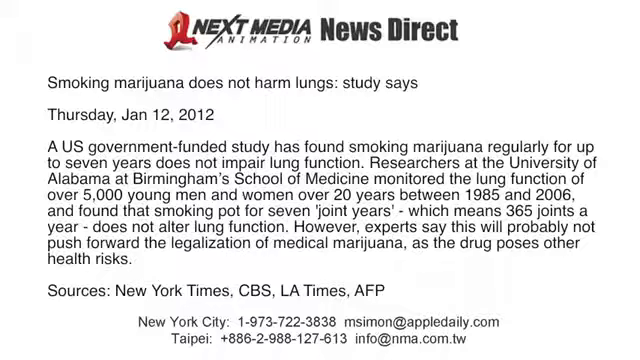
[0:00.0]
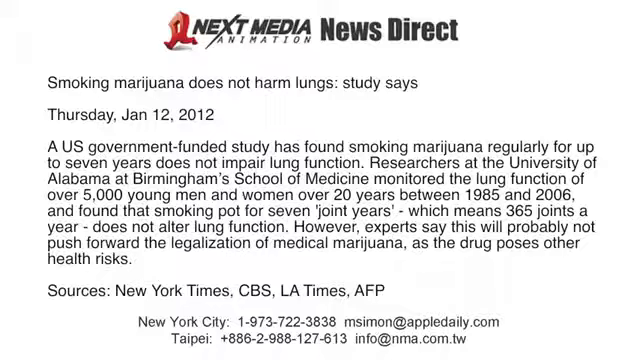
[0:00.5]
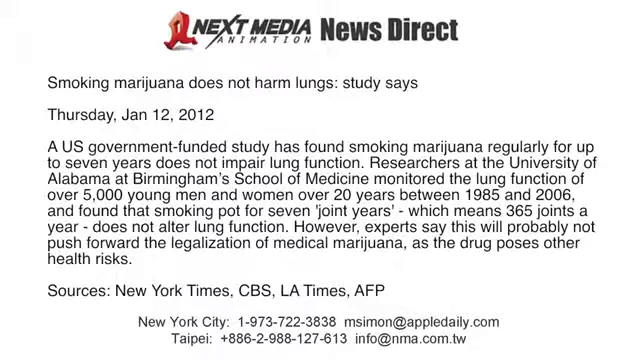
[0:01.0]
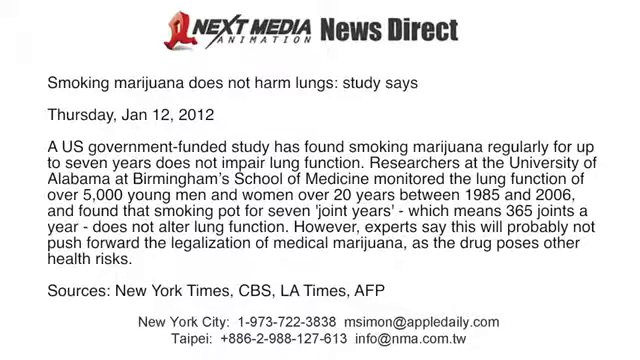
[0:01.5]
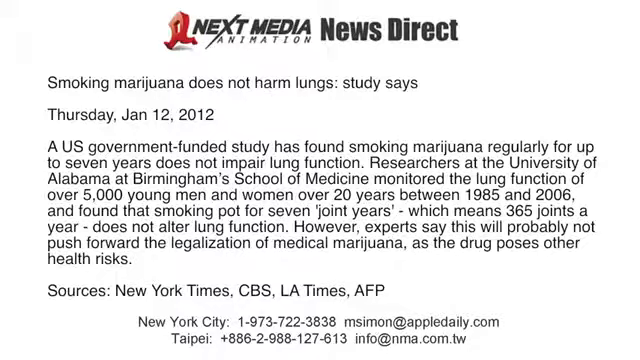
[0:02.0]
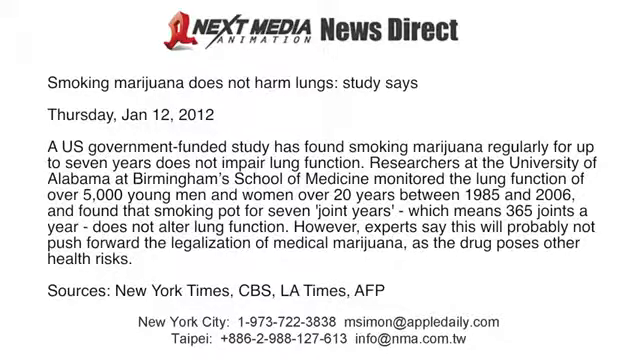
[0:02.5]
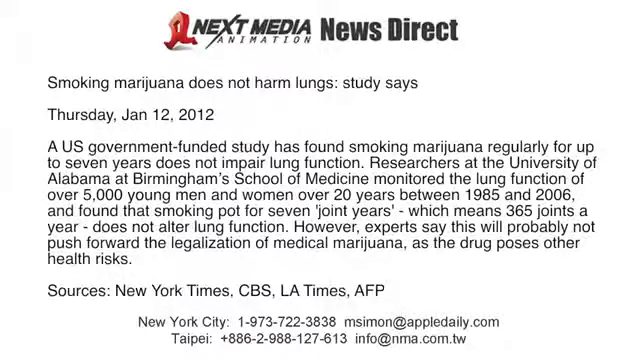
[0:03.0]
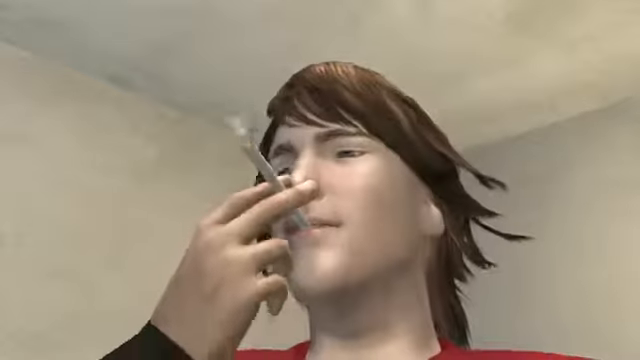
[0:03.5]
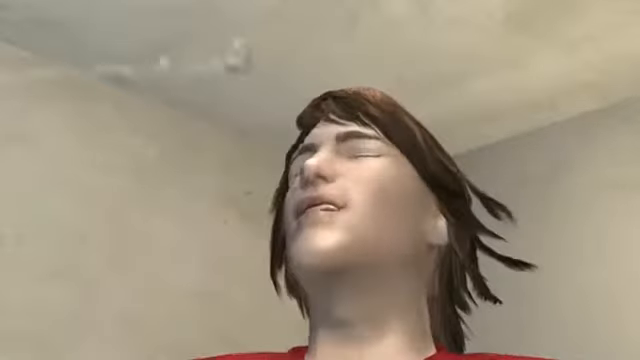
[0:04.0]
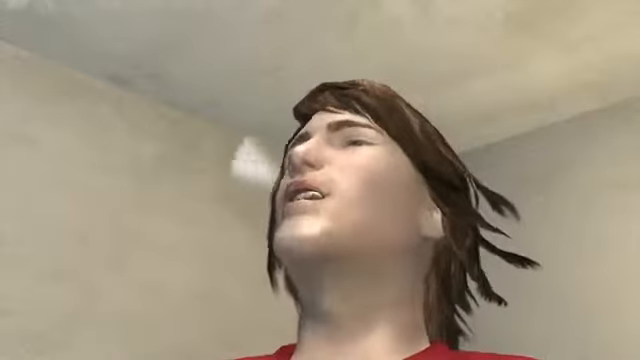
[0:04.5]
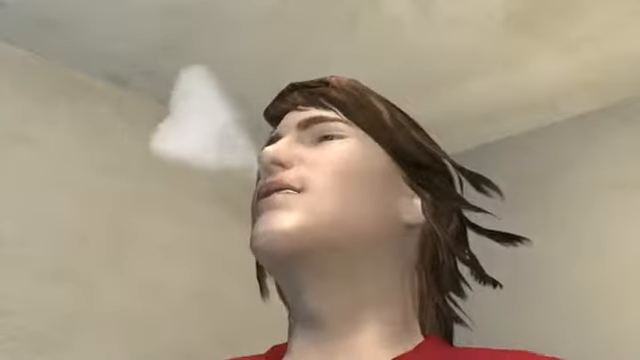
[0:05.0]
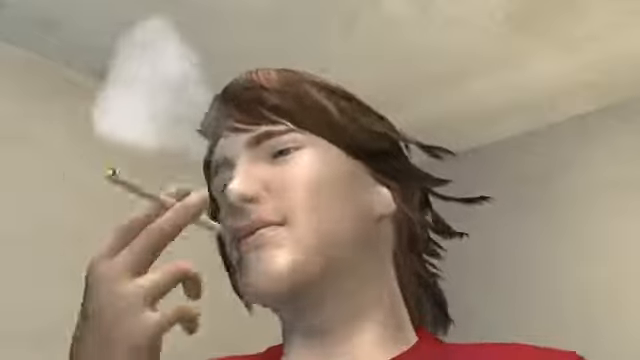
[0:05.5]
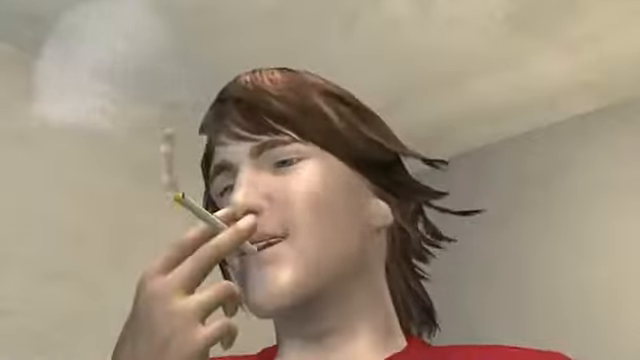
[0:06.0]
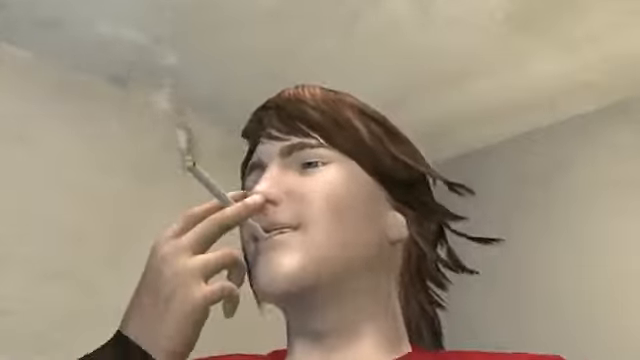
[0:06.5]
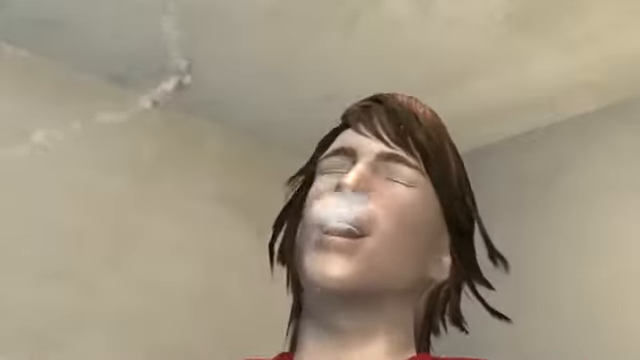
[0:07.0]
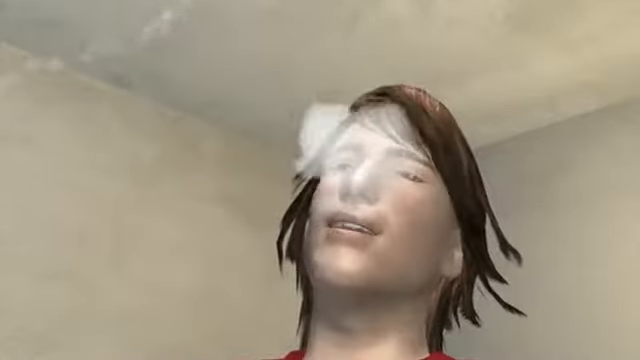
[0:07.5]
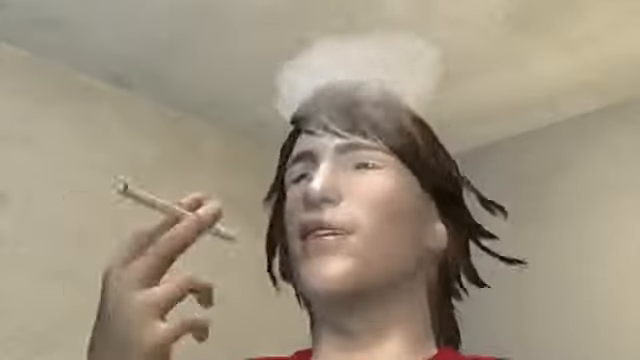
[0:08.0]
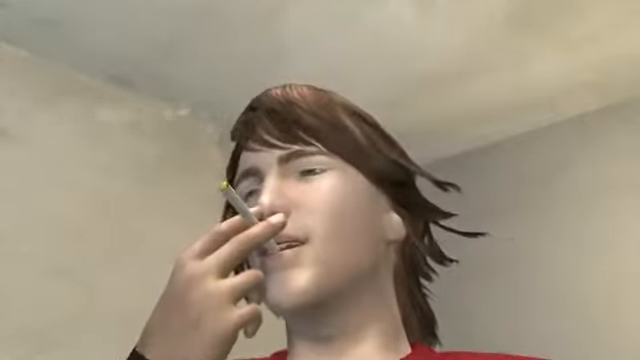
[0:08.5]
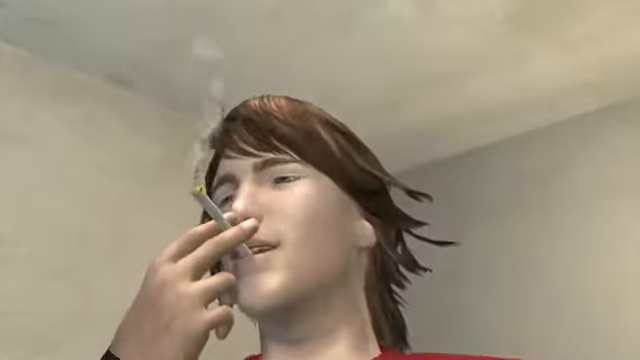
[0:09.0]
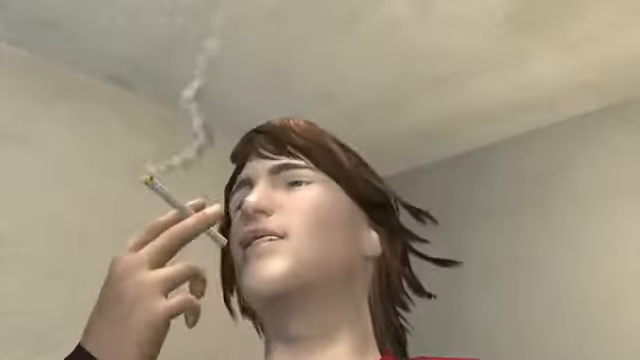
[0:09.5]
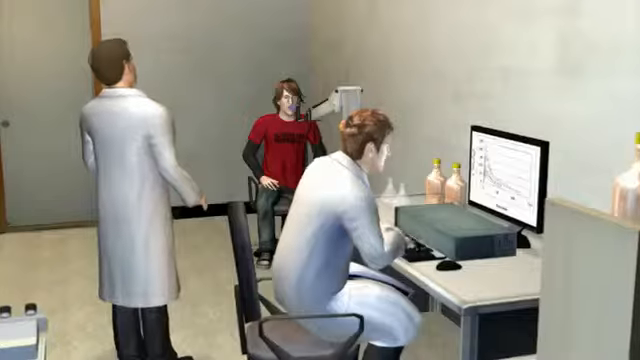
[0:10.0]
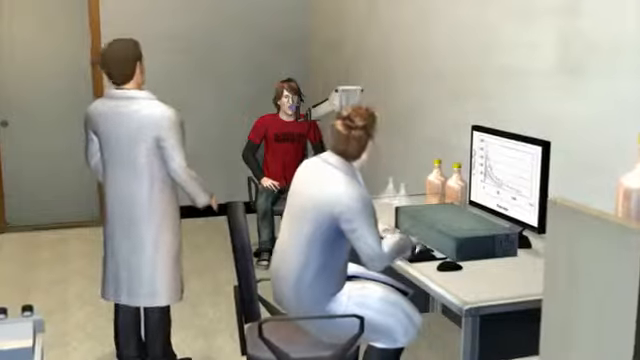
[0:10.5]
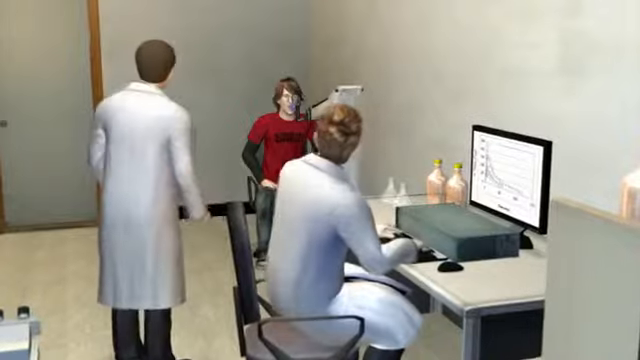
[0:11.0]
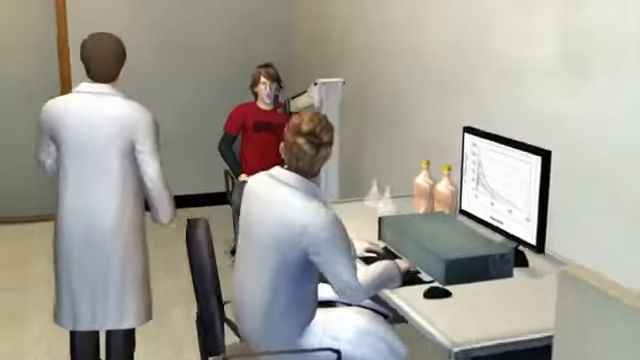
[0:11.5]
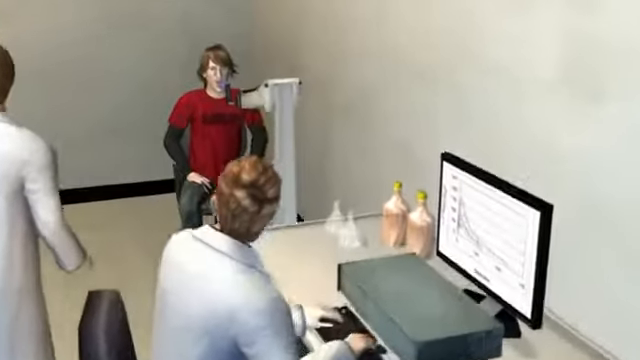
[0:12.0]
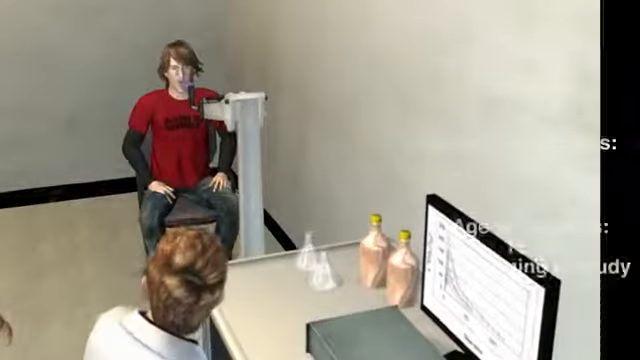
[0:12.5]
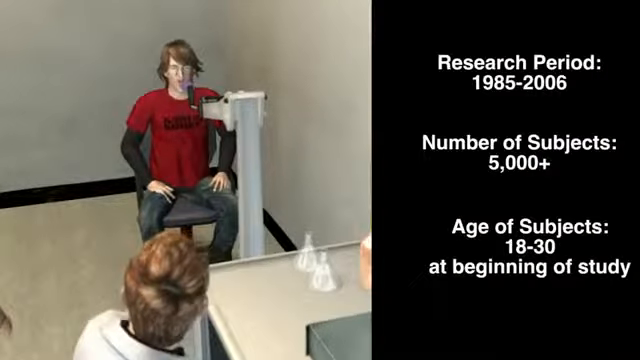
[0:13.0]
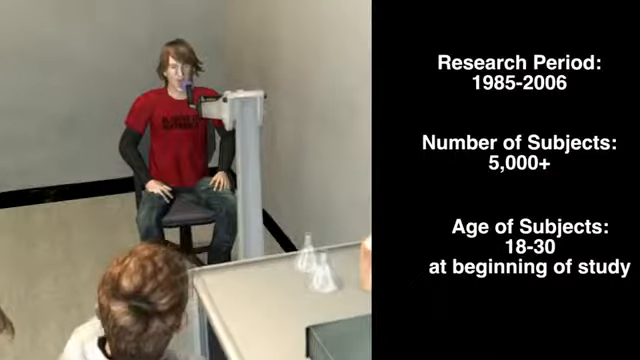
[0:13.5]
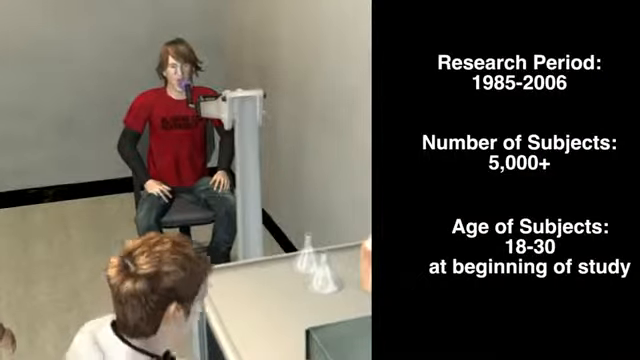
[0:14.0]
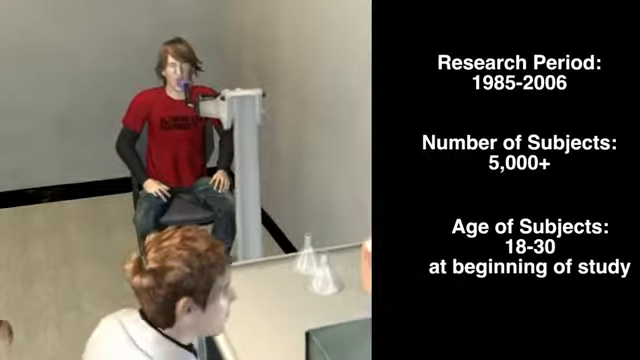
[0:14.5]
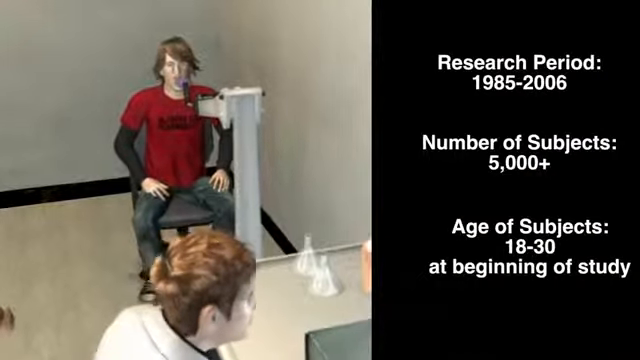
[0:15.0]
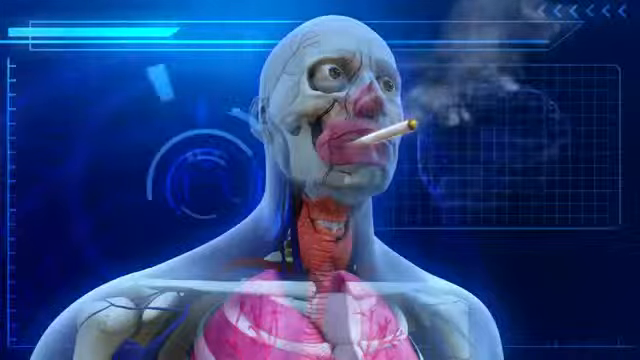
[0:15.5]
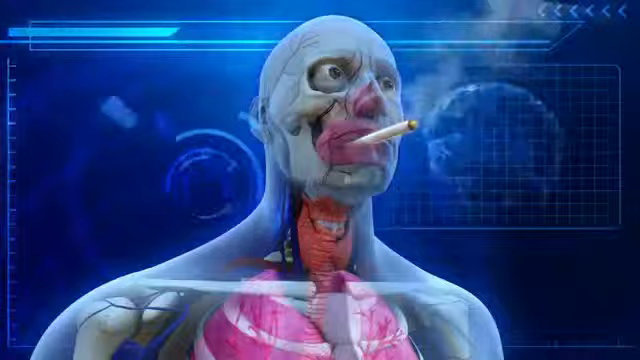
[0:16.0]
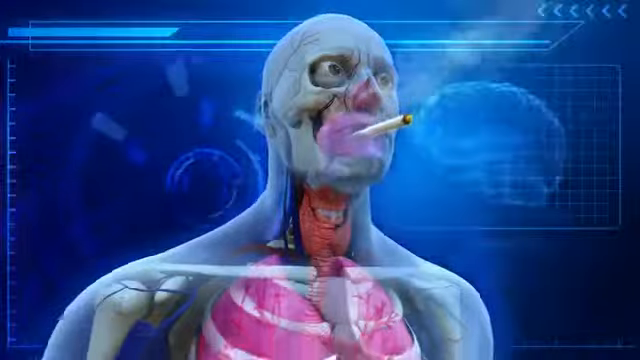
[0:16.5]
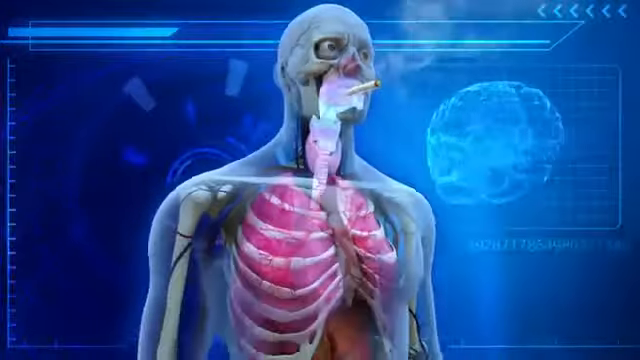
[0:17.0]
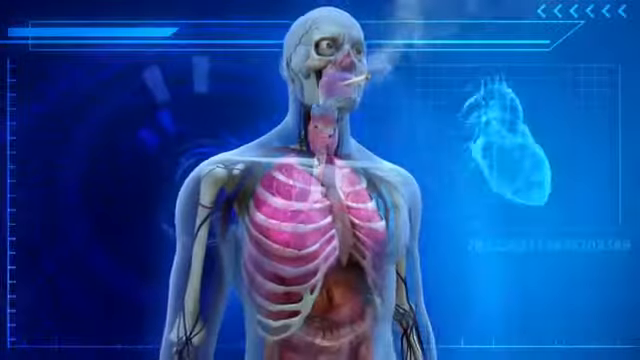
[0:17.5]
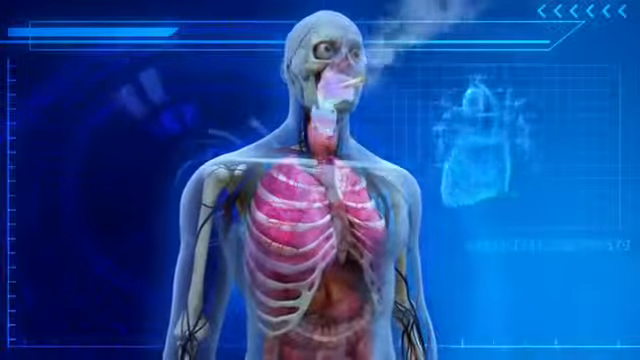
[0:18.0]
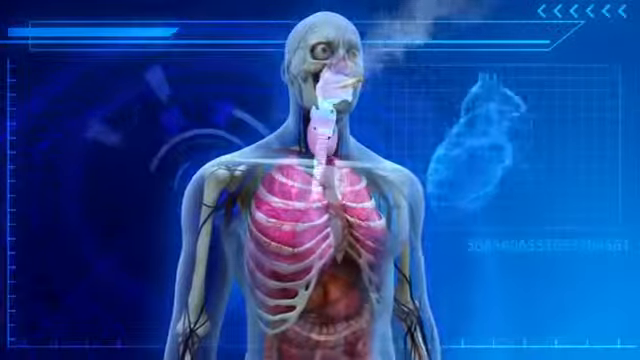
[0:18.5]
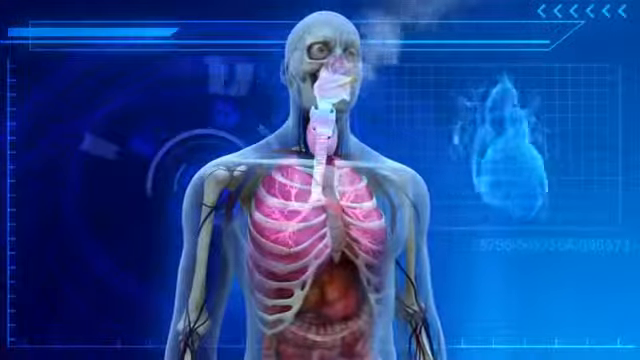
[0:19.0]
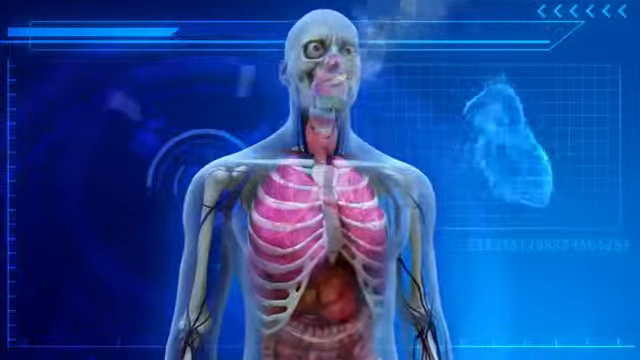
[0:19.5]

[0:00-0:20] The video opens on a white screen with text reading "Next Media Animation News Direct." Beneath it is the text "smoking marijuana does not harm lungs, study says," followed by information from a U.S. government funded study stating that it found smoking marijuana regularly for up to seven years does not impair lung function. The scene cuts to what looks like a digital animated clip of someone taking a drag from a cigarette with their right hand. They lift their head up slightly and exhale the smoke, bring the cigarette back to their face, take another hit and exhale again, then do it a third time. Next comes more CGI-looking animated footage of what looks like two research scientists: one standing in the background and one sitting on a chair on the right side, typing on a keyboard while staring at a screen. In the background, someone in a red shirt sits looking at them both.